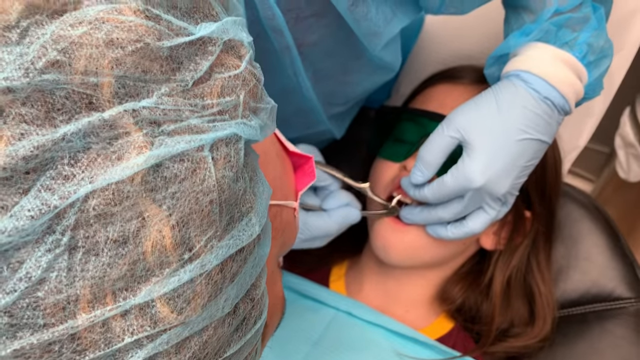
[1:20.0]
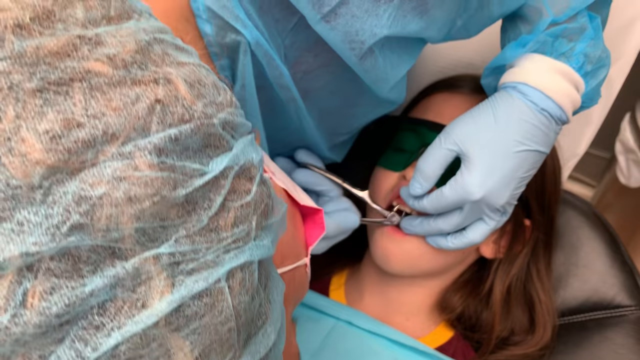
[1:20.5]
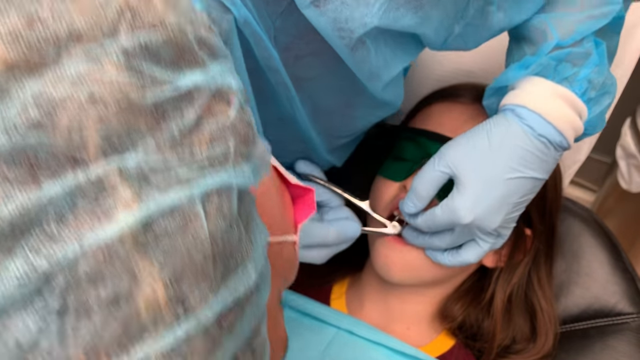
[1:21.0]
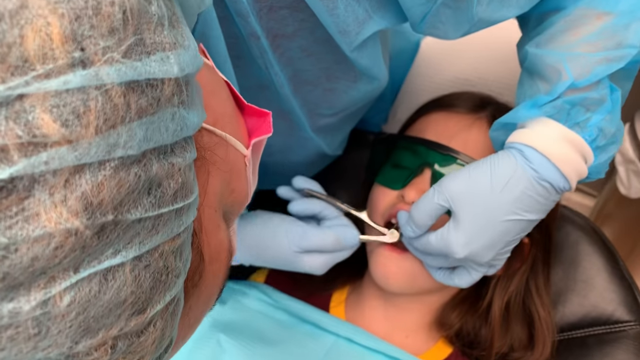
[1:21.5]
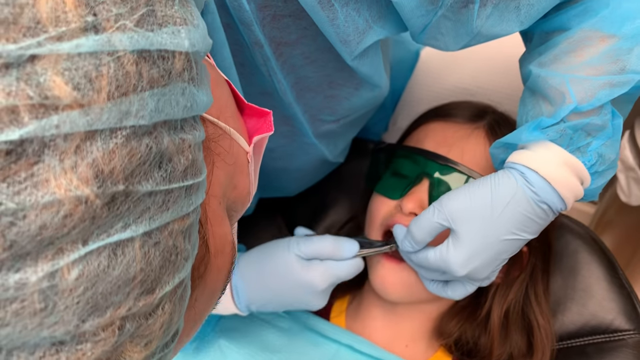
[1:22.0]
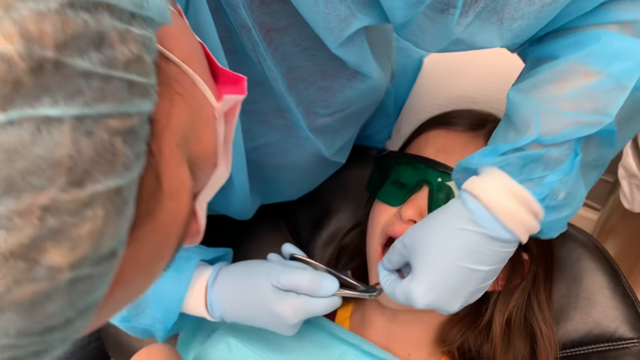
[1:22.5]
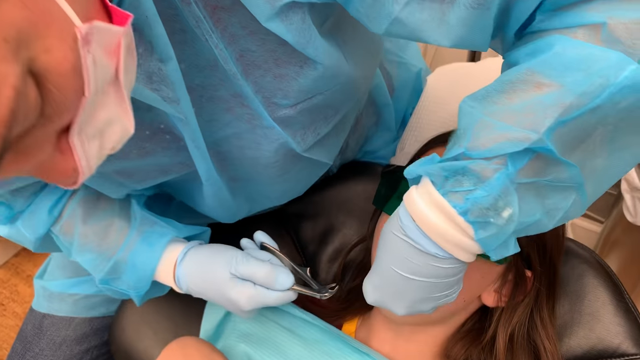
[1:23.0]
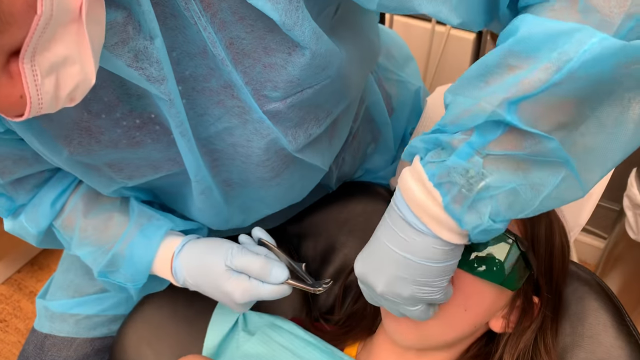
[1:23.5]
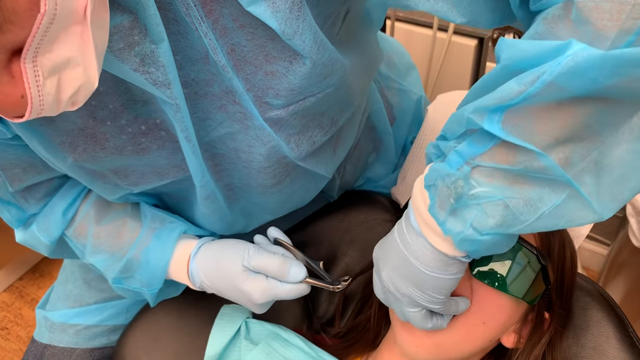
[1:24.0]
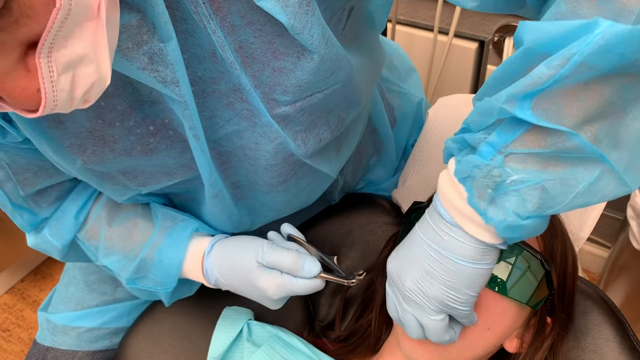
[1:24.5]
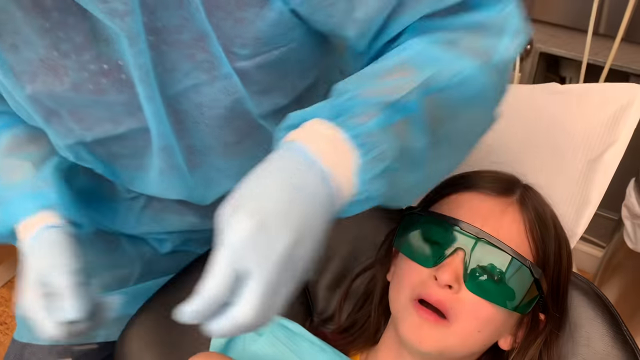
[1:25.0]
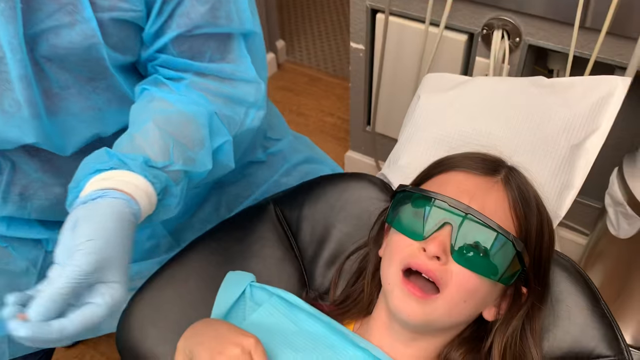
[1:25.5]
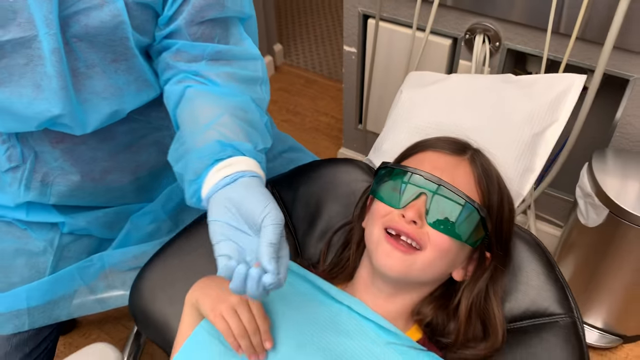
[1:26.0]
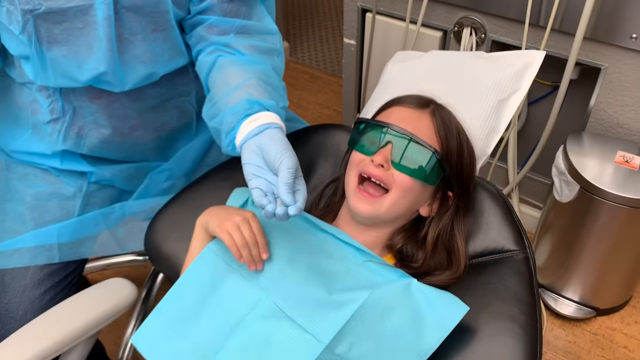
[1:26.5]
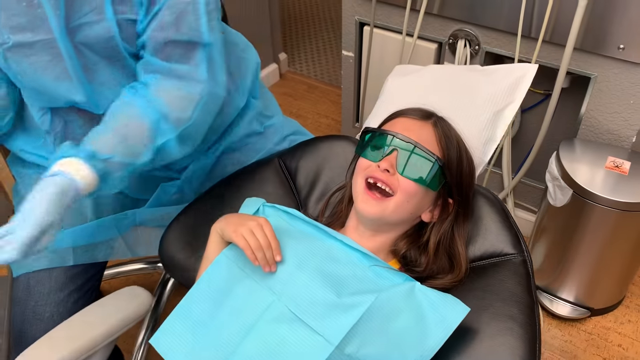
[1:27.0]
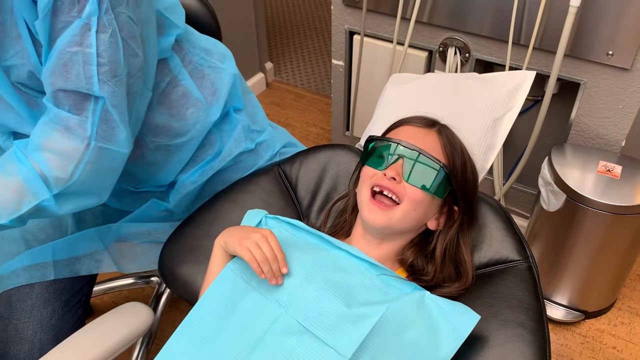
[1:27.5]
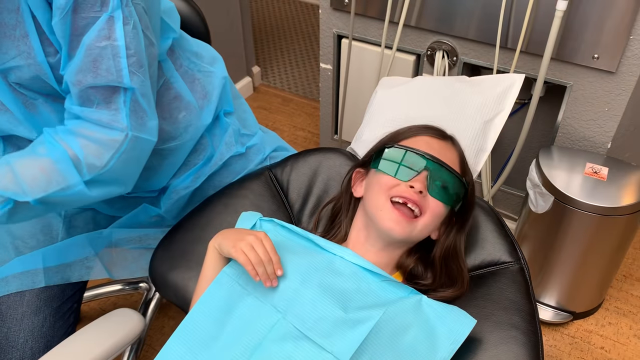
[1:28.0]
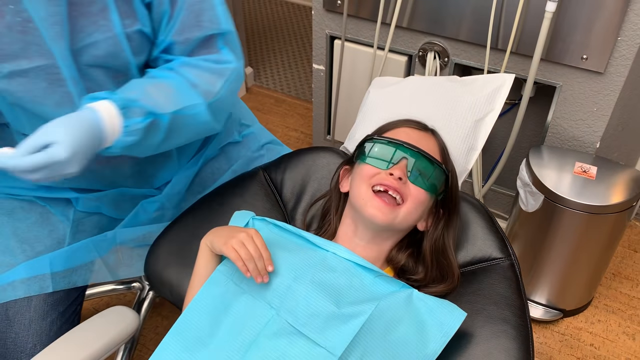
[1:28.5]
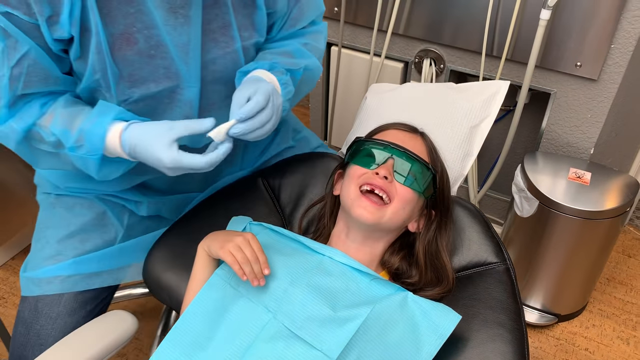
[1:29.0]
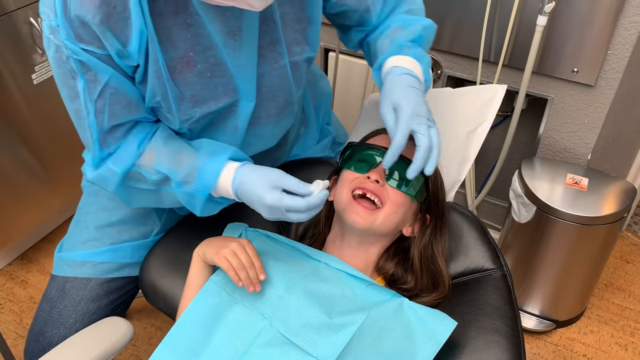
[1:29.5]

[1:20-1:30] The dentist positions the pliers on the tooth she is going to remove, with her left hand keeping the little girl's upper lip and upper mouth area open. It appears she closes the pliers and twists; the pliers do not remove the tooth but loosen it. She removes the pliers with her right hand, then her left hand goes inside the girl's mouth and quickly takes out the tooth, which is then seen in the dentist's left hand. The little girl smiles, her tooth missing. The dentist gets a little tissue with her right hand for the girl's mouth.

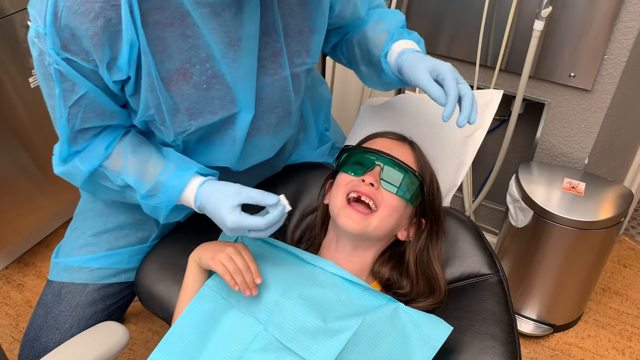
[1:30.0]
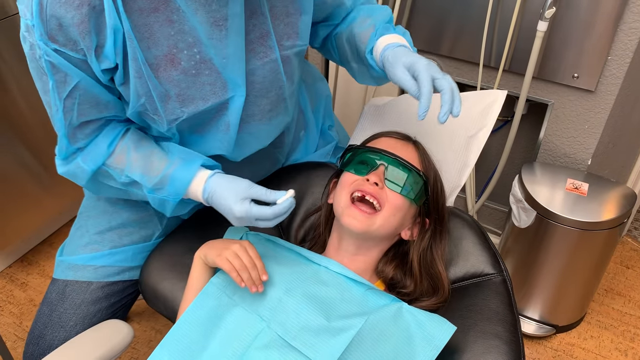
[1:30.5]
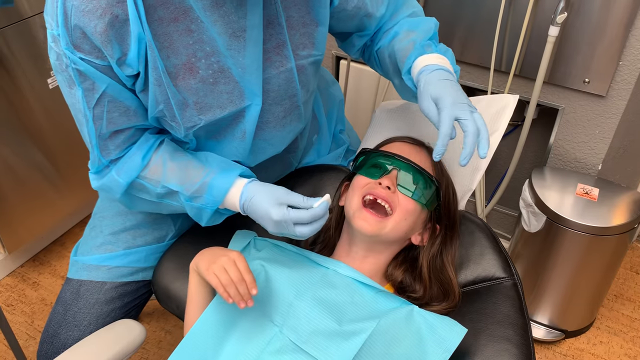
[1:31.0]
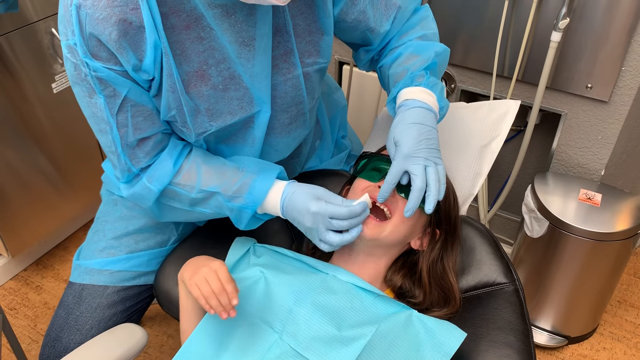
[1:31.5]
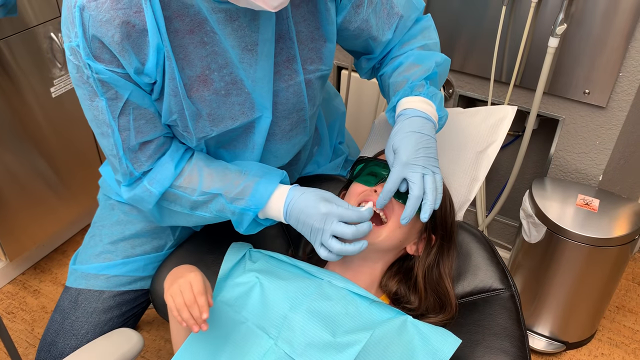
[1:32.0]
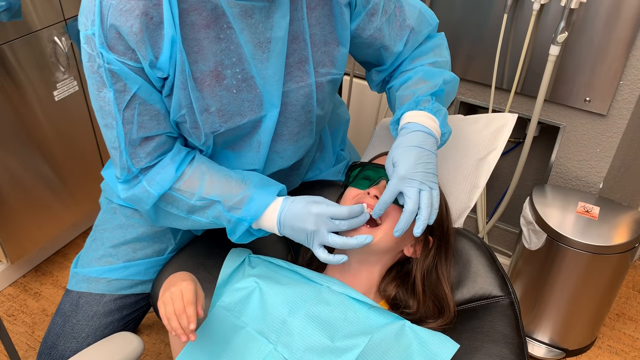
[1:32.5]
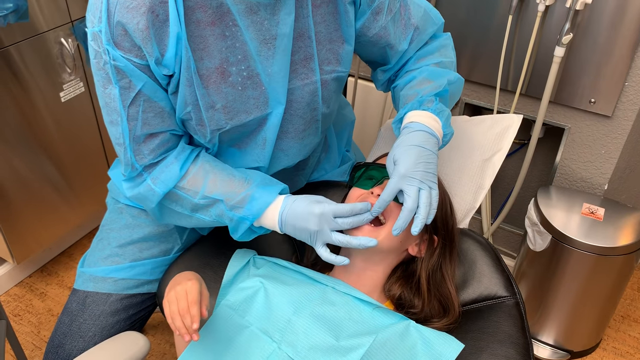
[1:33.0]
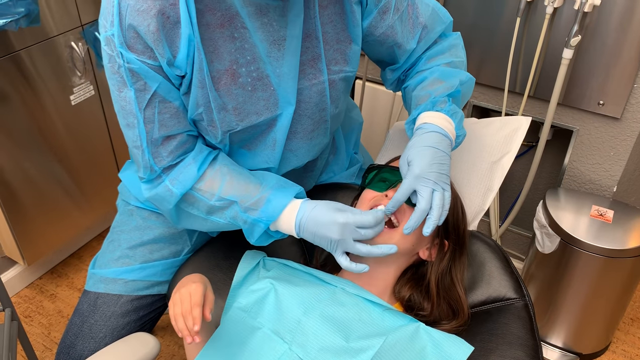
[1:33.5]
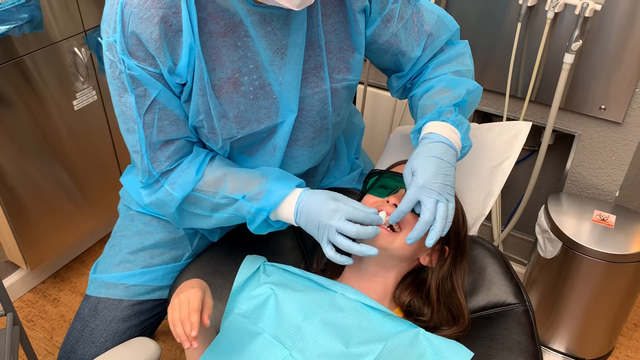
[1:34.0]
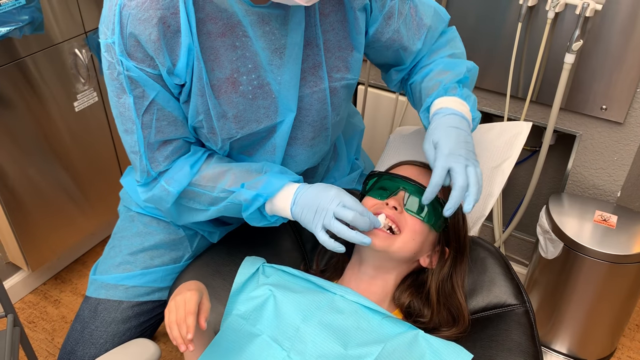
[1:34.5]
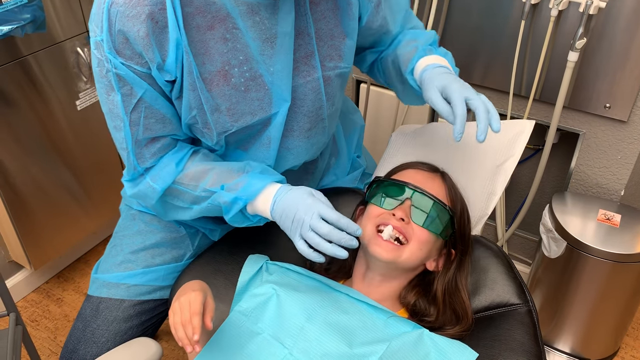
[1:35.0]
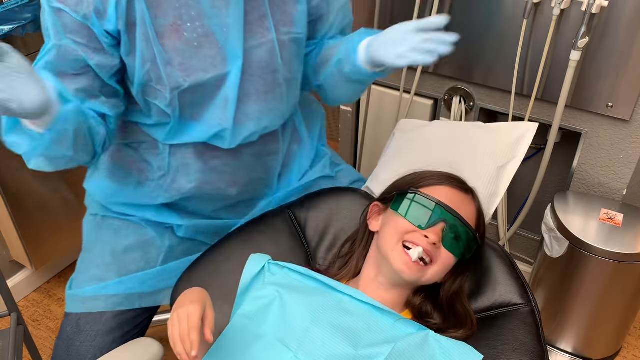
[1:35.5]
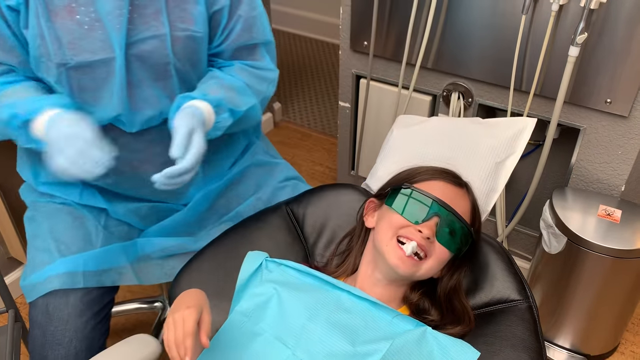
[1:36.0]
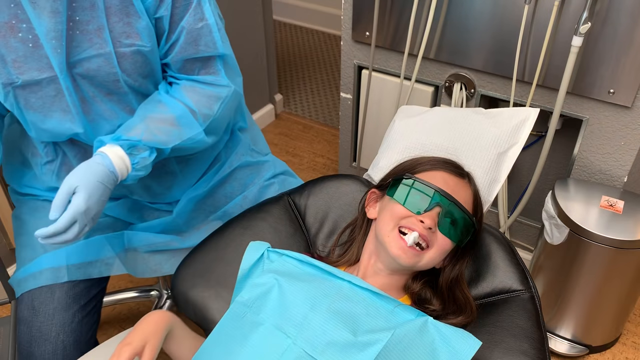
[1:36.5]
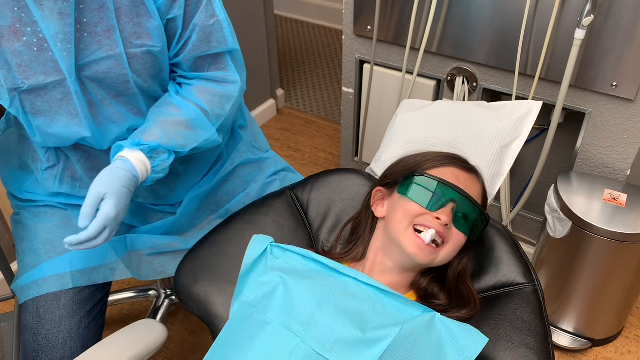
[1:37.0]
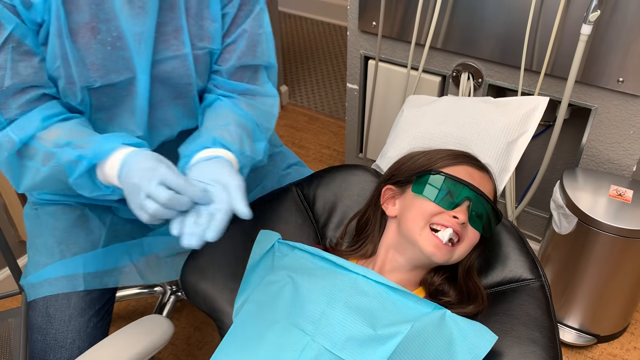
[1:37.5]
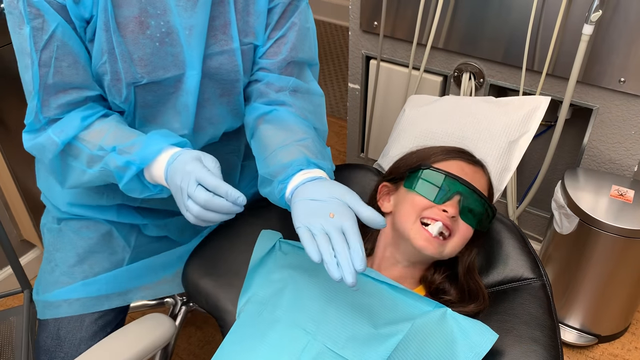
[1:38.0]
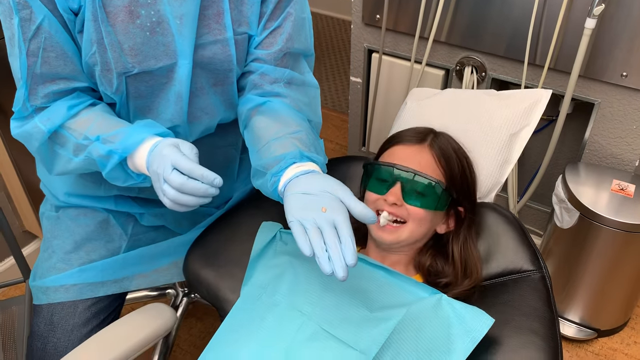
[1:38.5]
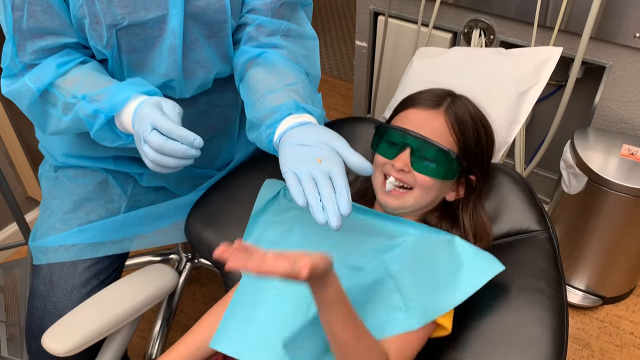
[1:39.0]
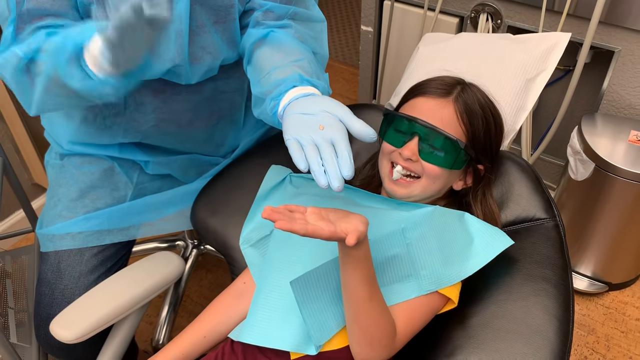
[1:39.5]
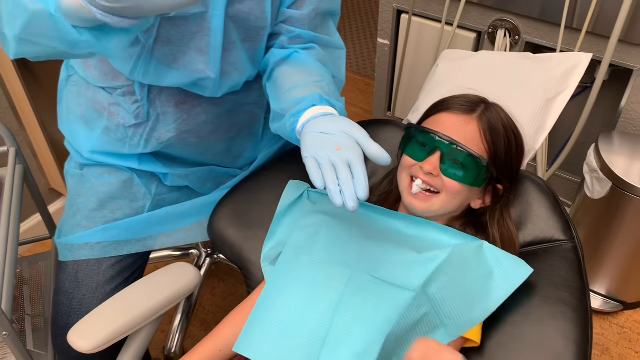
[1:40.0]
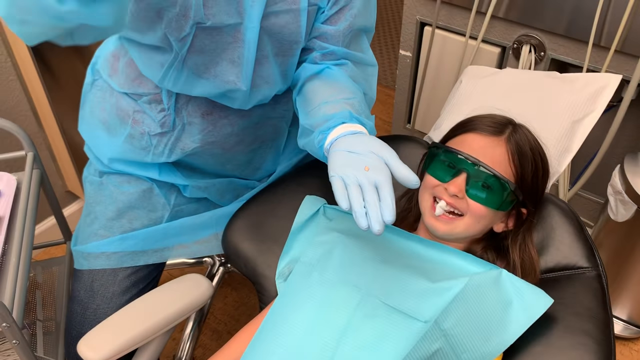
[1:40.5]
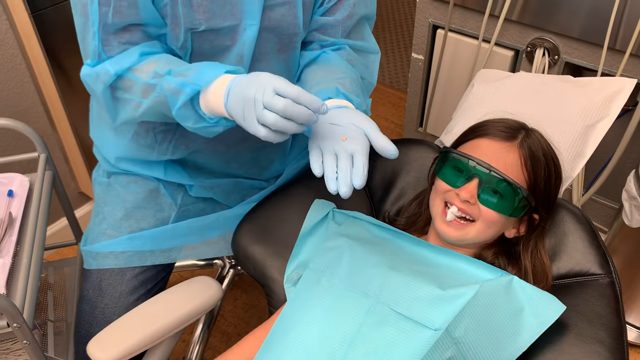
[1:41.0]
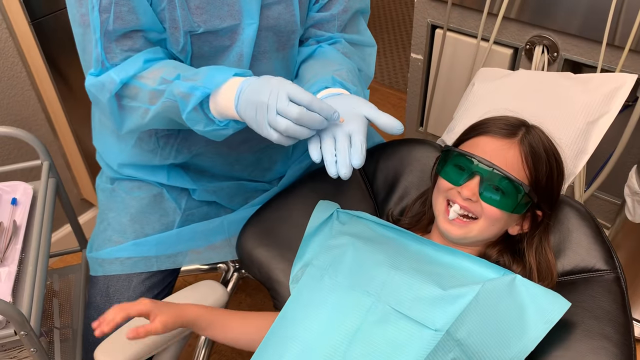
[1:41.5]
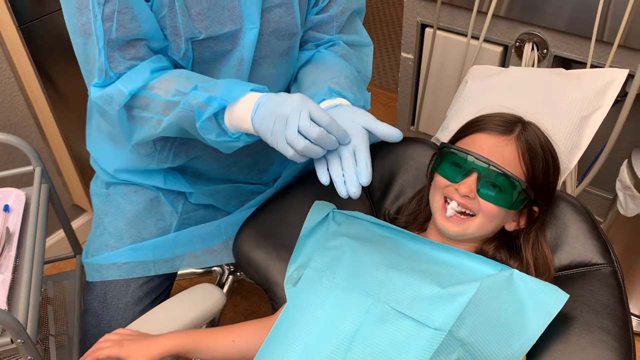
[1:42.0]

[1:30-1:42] The little girl has her mouth open and is very happy; she looks like she is laughing. The dentist places the little tissue, which almost looks like gauze or a thick piece of cotton, into the gap in the gum where the tooth was extracted, and the girl bites down on it. The dentist shows the little girl her baby tooth, holding it in her left hand.